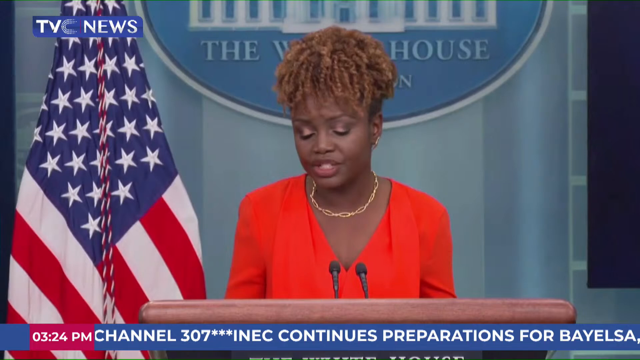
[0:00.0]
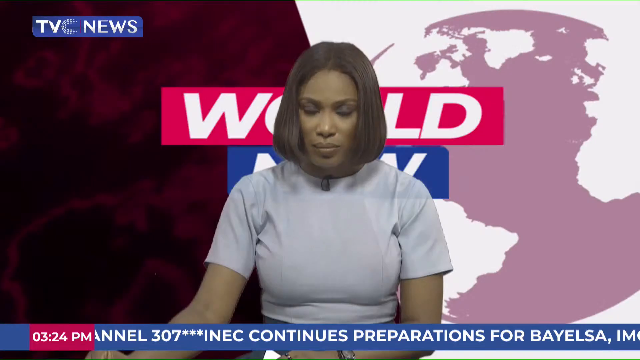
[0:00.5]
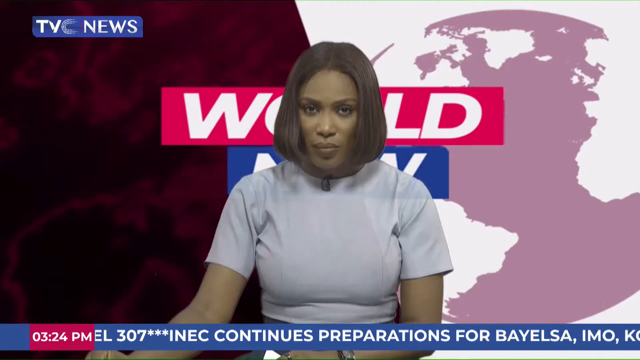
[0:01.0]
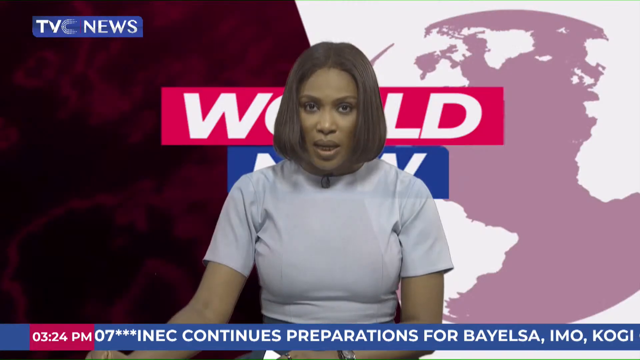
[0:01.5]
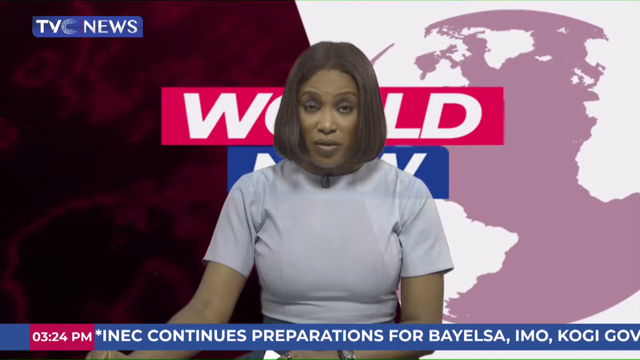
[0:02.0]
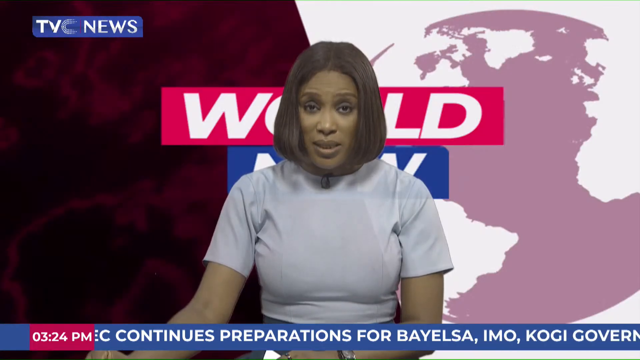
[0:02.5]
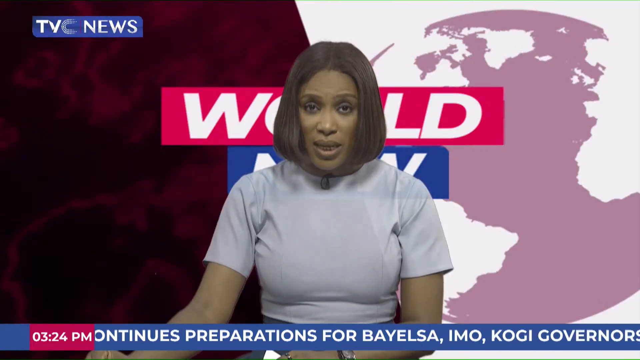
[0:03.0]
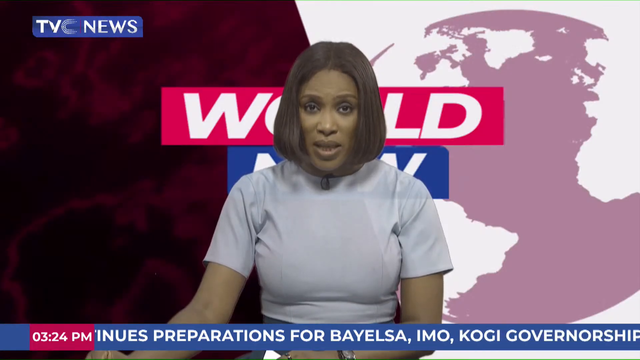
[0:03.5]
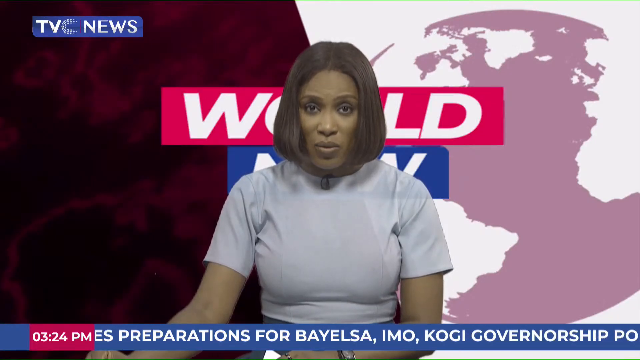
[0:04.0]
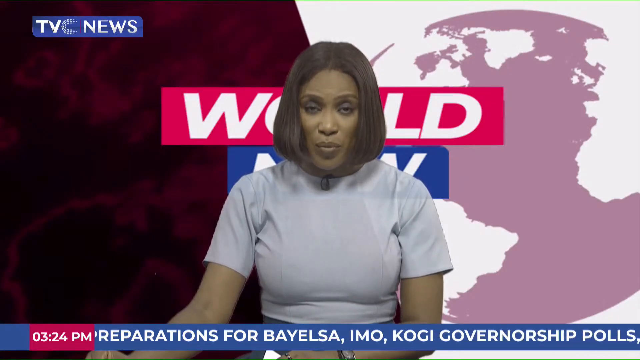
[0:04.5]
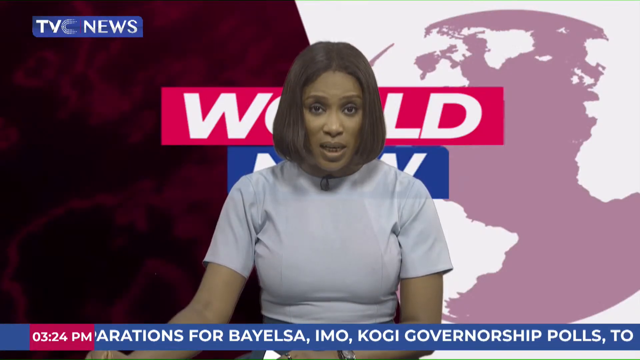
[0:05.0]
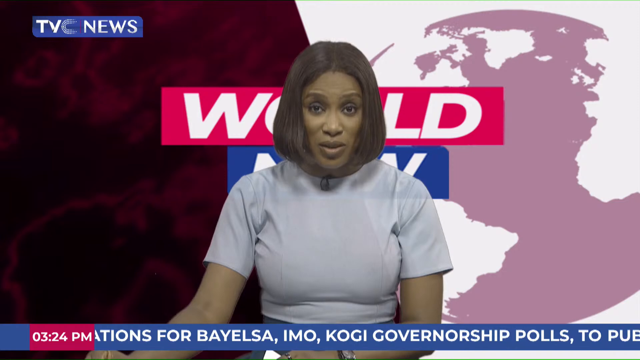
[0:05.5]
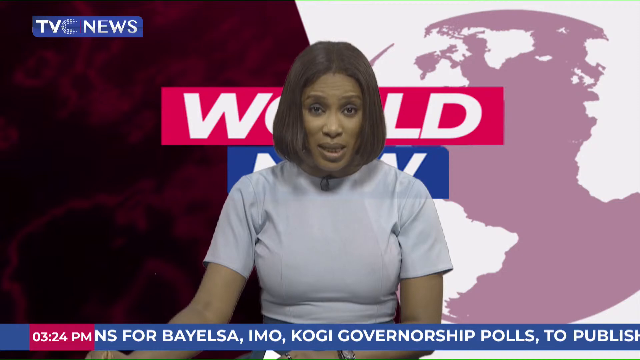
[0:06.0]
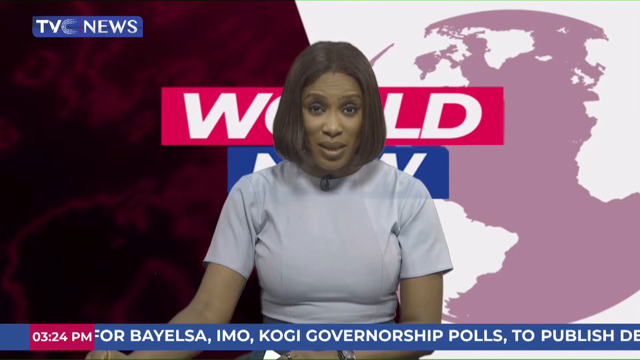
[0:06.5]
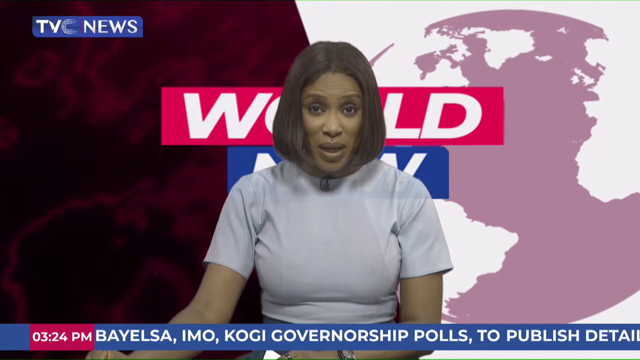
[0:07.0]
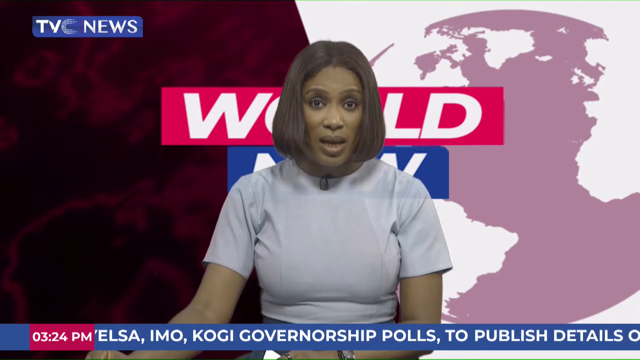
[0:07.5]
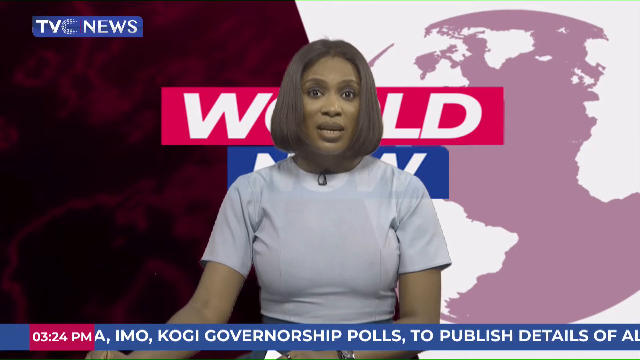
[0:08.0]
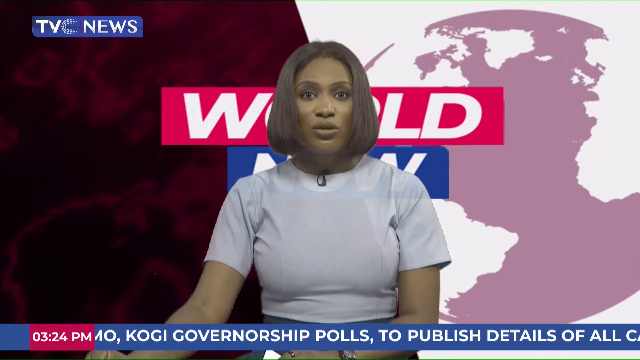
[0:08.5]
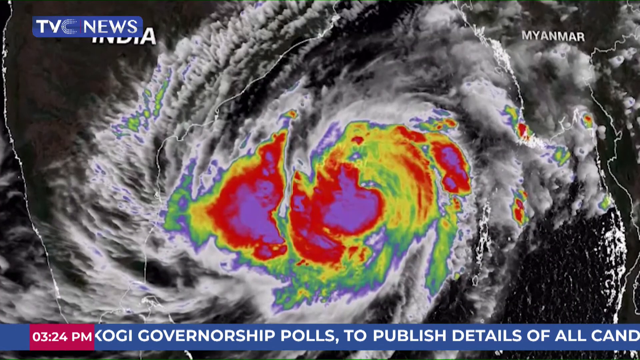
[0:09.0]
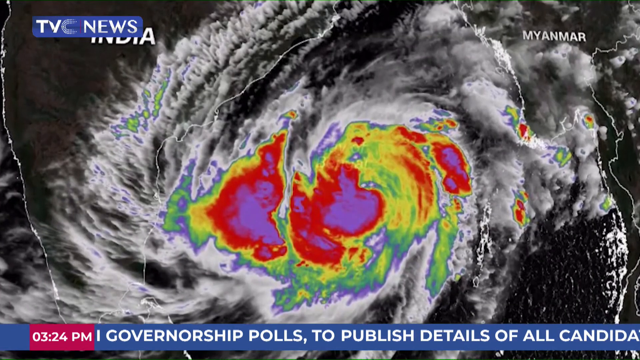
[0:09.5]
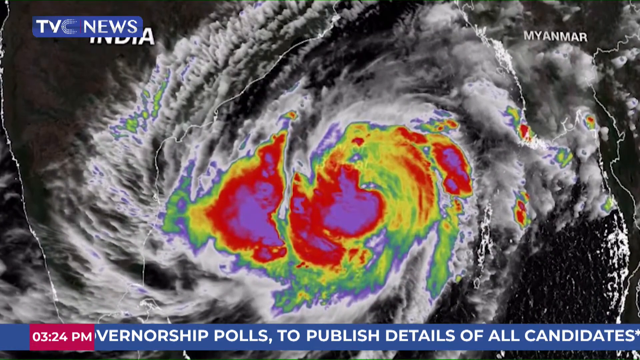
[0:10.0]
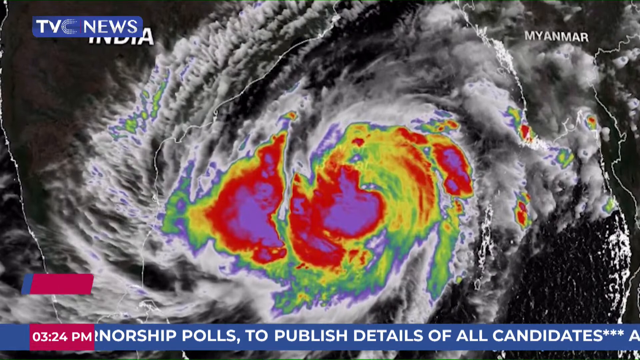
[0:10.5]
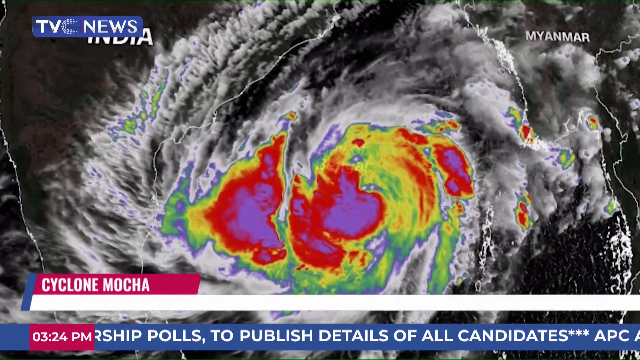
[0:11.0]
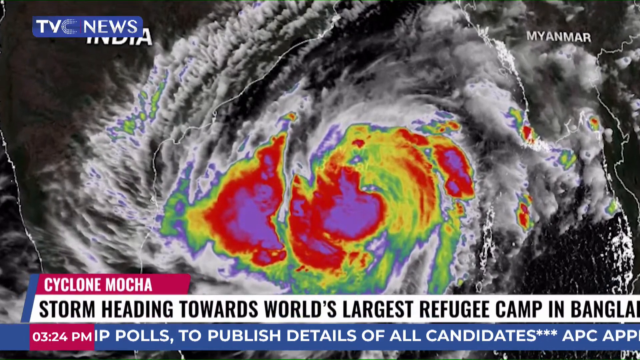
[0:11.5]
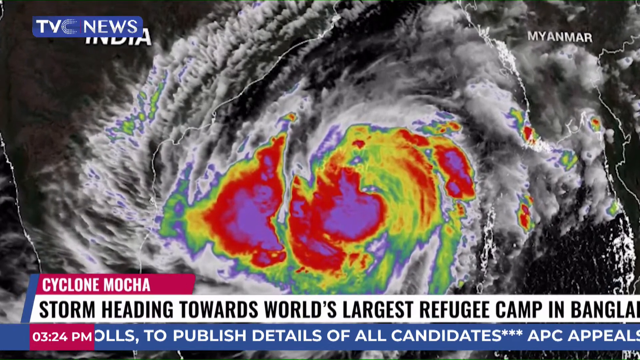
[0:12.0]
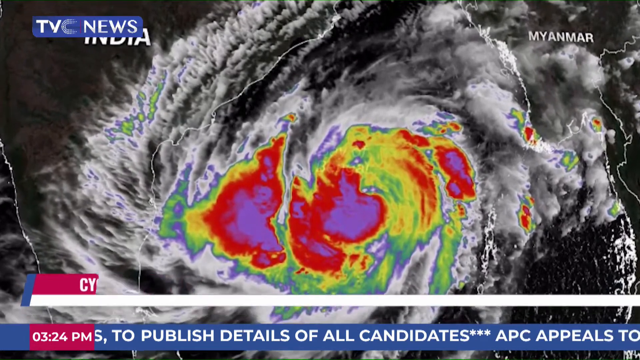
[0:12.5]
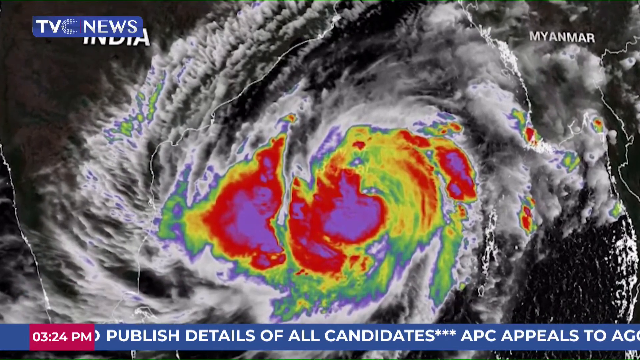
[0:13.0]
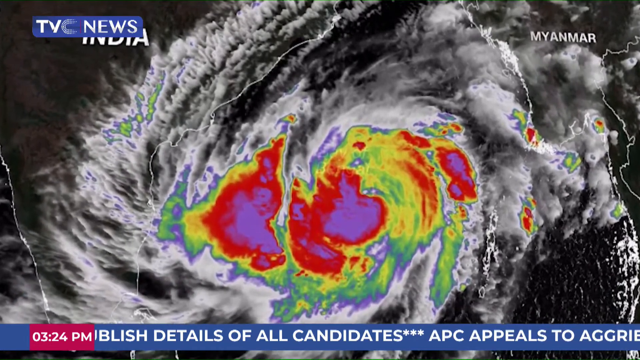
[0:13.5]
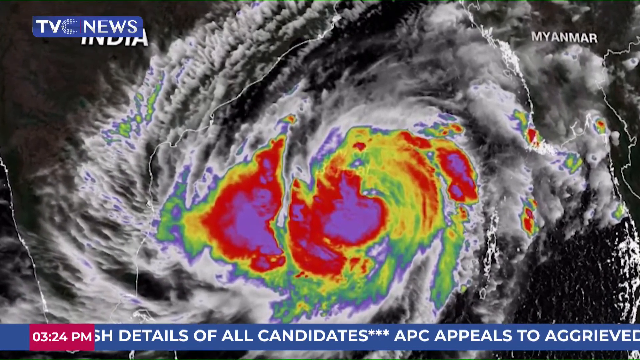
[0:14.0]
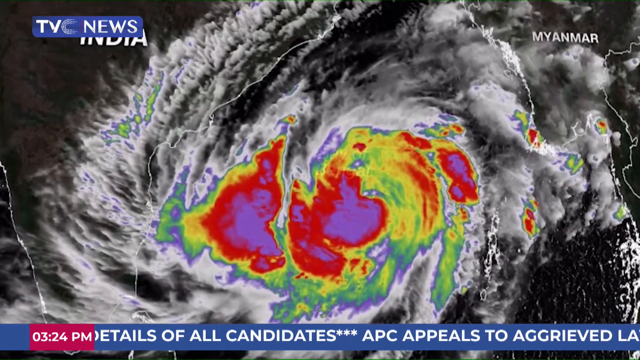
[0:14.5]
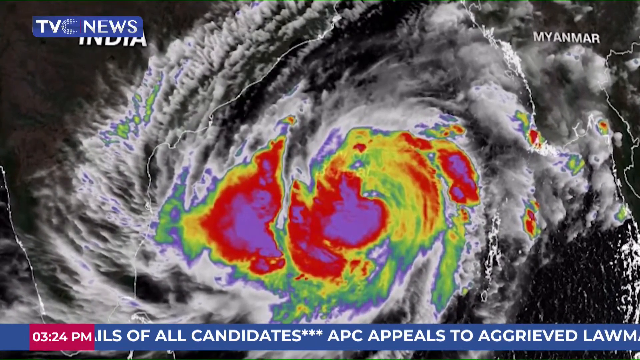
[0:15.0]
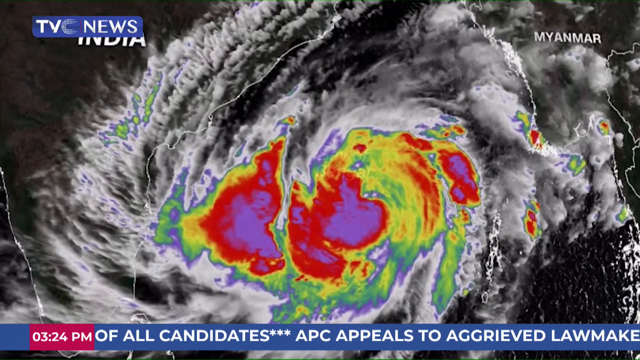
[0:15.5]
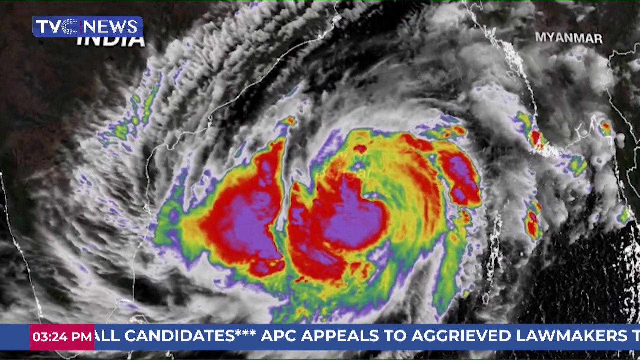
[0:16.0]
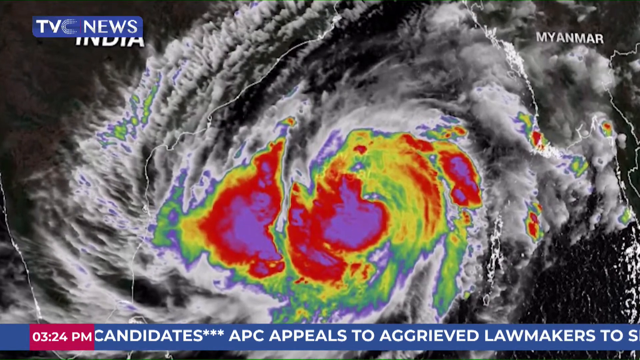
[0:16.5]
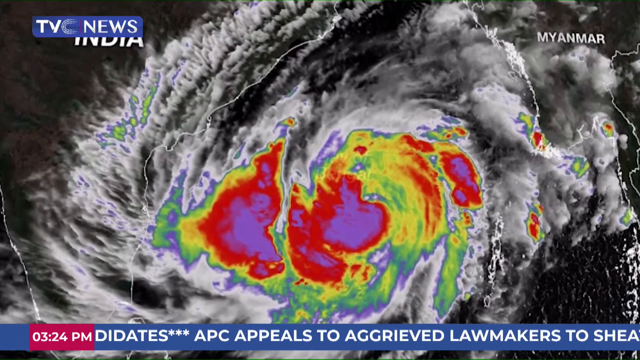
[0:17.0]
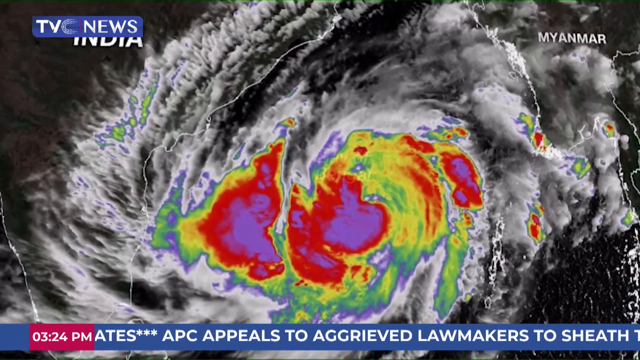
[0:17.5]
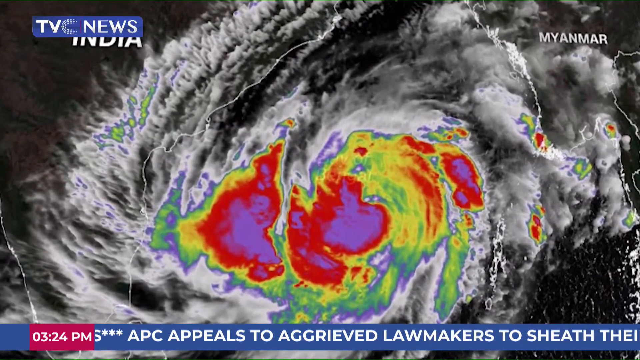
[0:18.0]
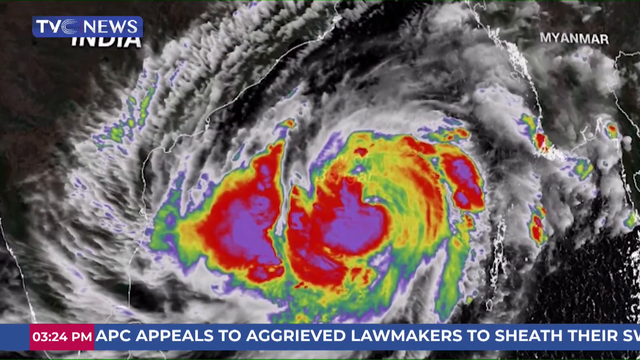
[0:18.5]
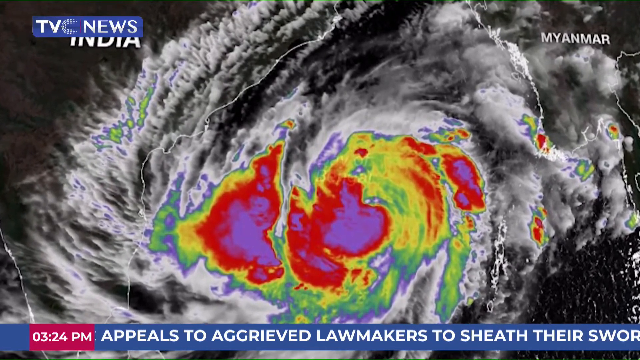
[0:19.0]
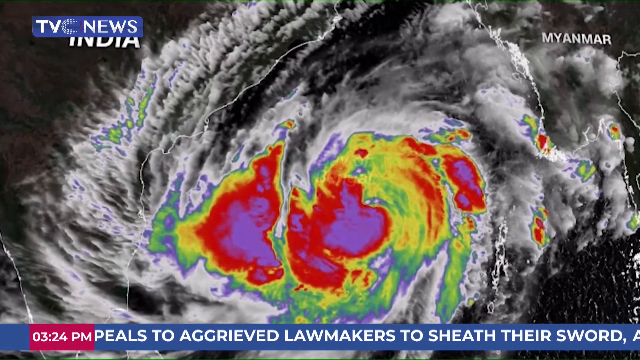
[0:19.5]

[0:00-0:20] The center of a storm is shown. It is a cyclone, big and spreading over a very wide area.